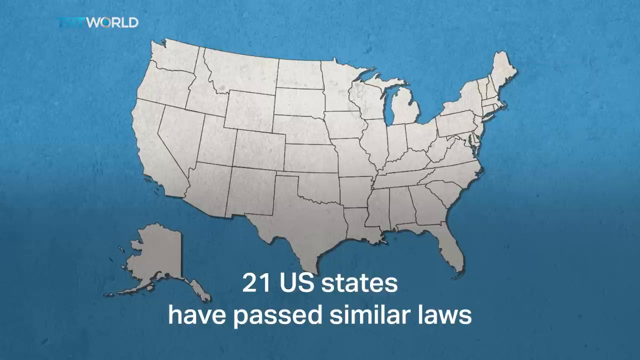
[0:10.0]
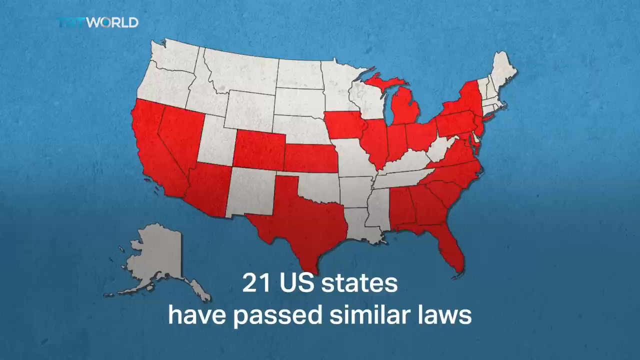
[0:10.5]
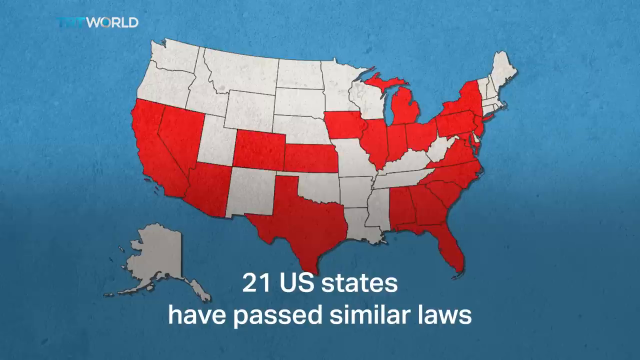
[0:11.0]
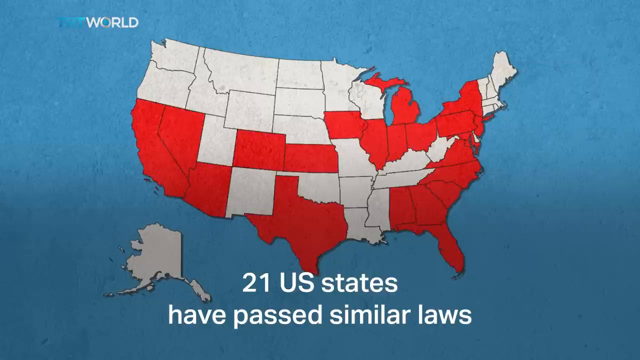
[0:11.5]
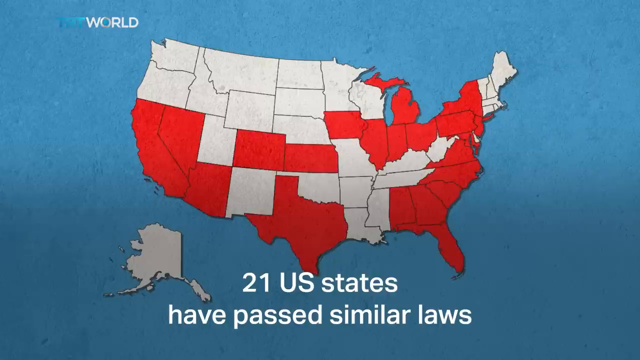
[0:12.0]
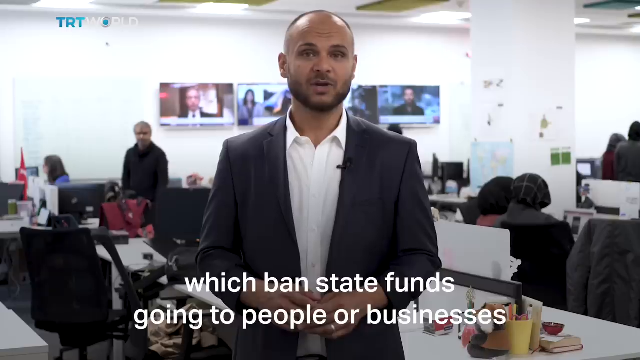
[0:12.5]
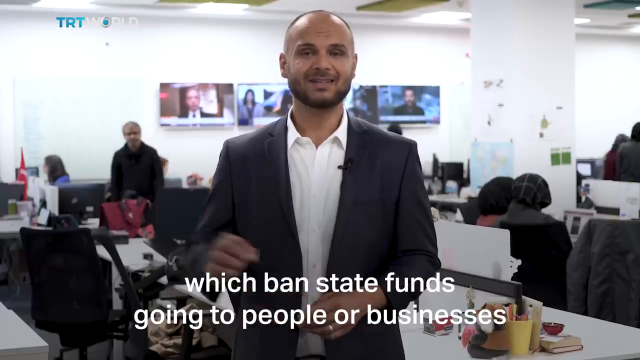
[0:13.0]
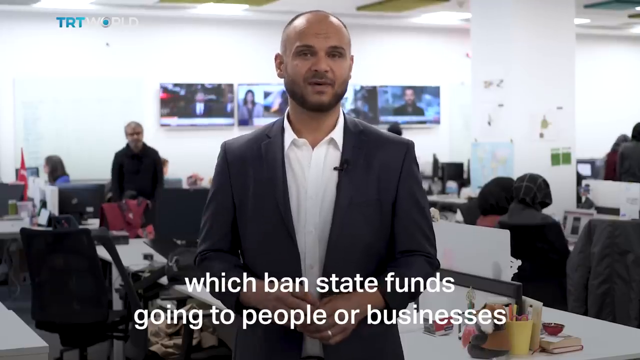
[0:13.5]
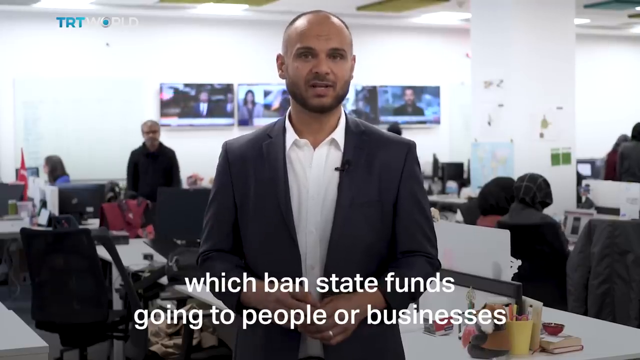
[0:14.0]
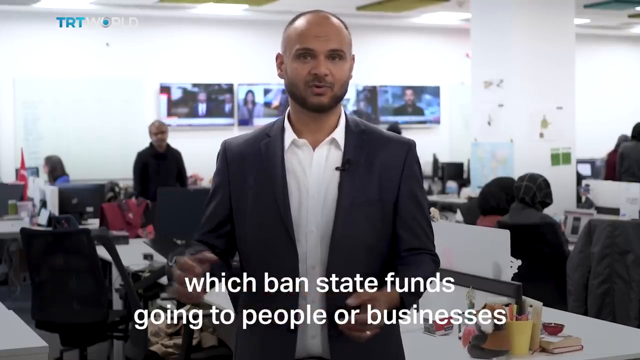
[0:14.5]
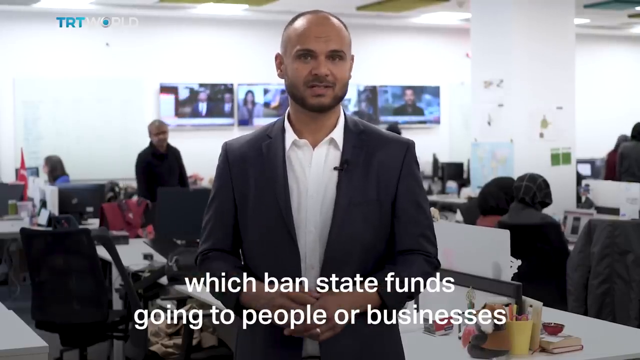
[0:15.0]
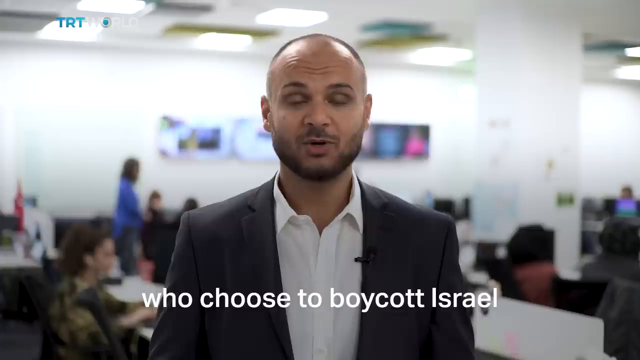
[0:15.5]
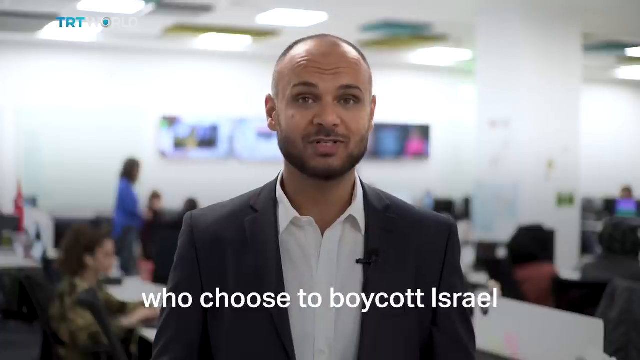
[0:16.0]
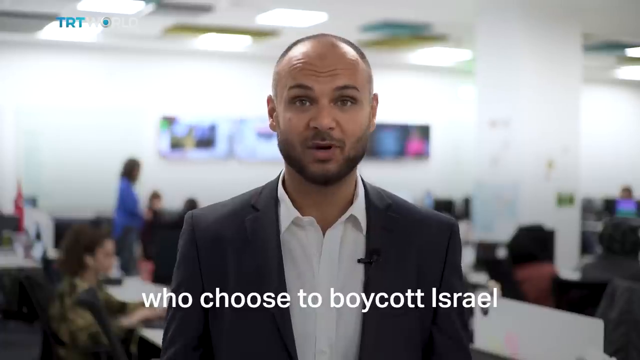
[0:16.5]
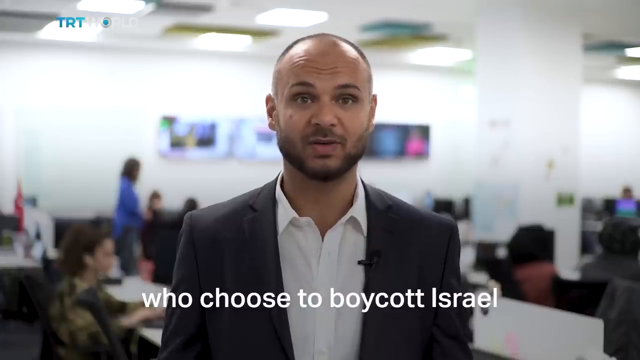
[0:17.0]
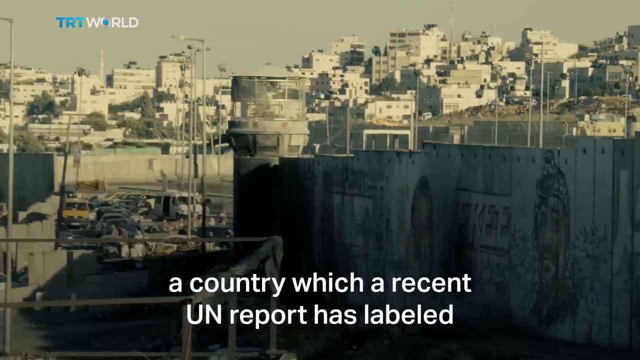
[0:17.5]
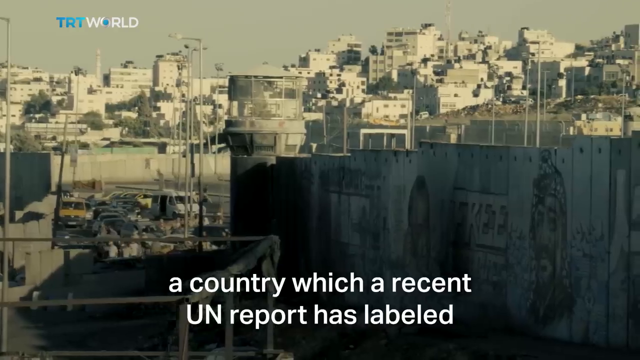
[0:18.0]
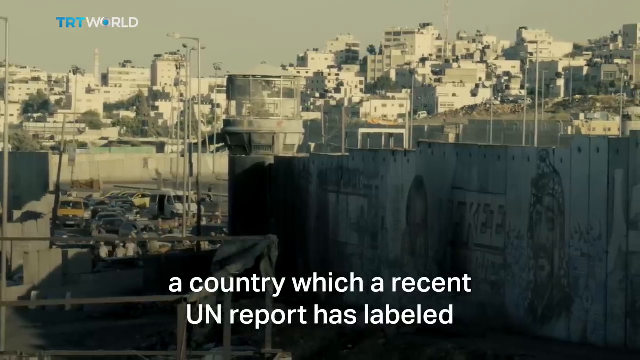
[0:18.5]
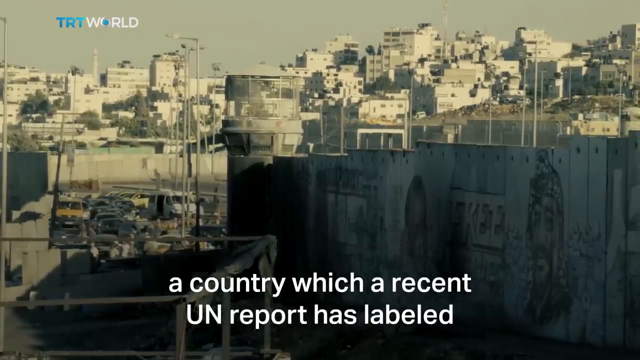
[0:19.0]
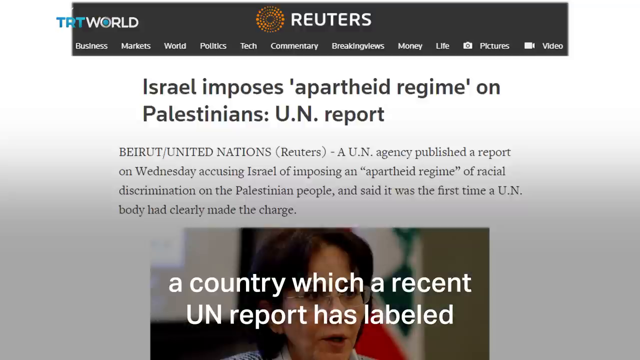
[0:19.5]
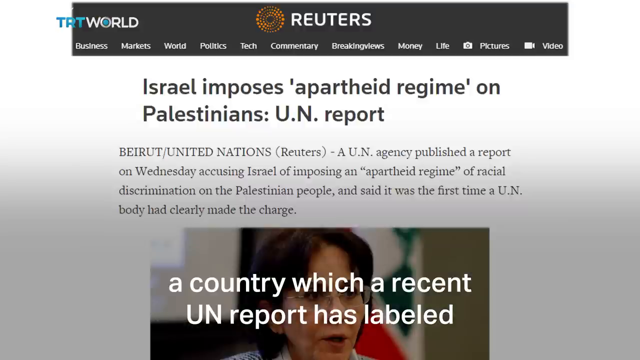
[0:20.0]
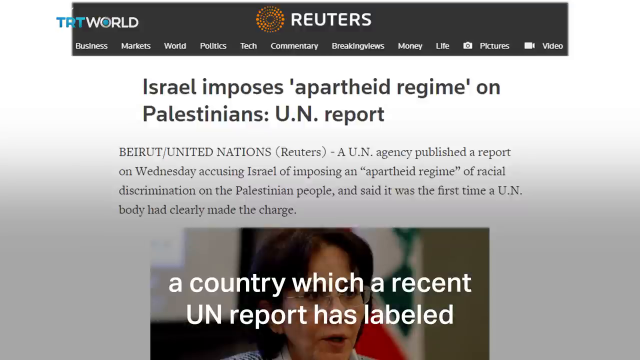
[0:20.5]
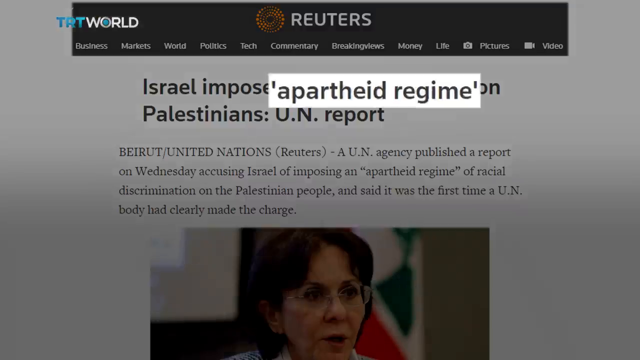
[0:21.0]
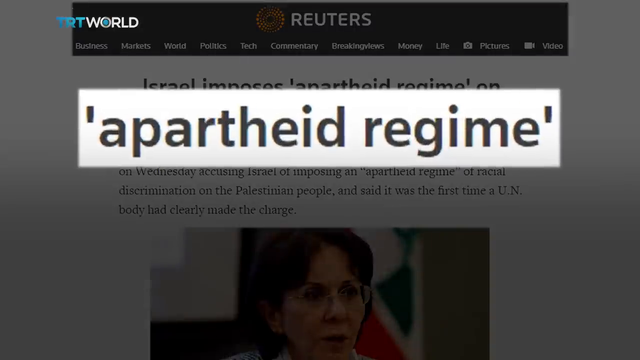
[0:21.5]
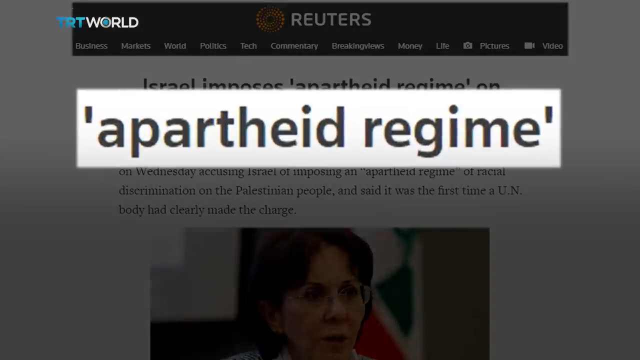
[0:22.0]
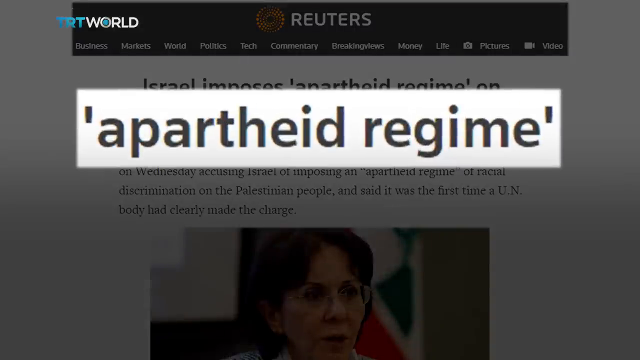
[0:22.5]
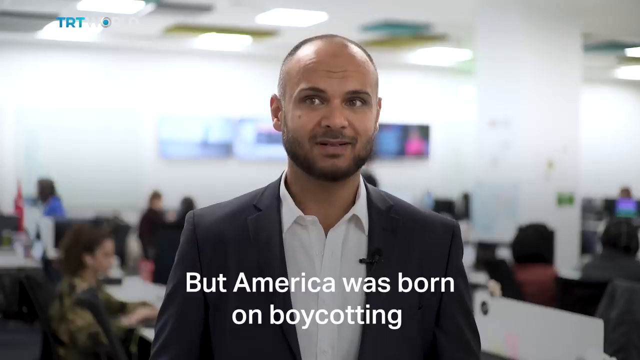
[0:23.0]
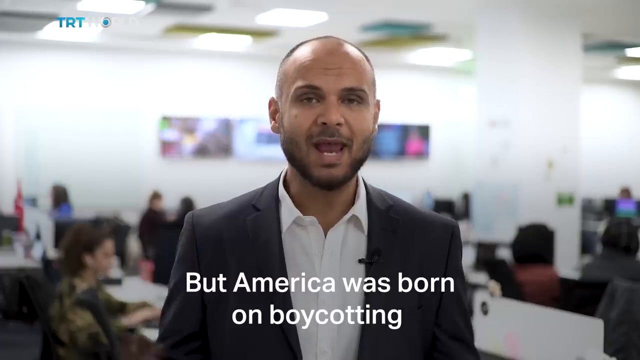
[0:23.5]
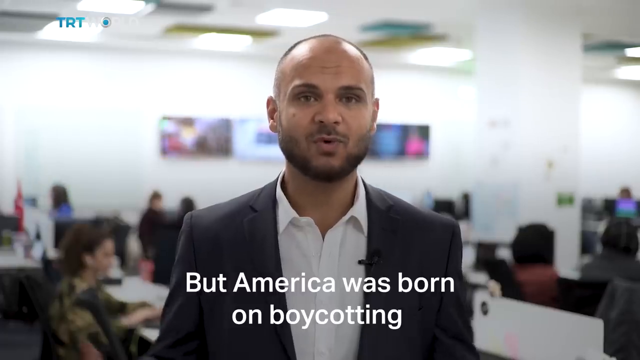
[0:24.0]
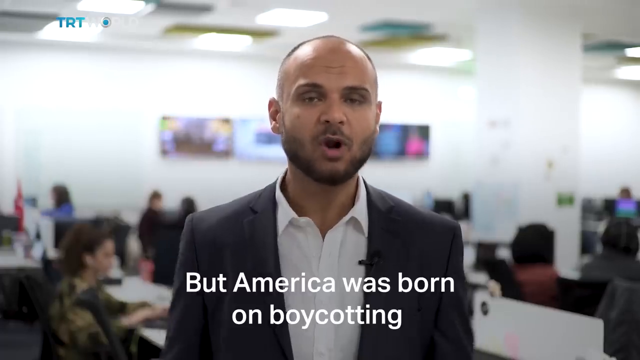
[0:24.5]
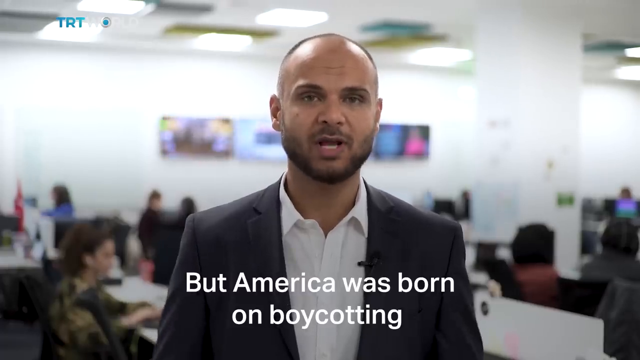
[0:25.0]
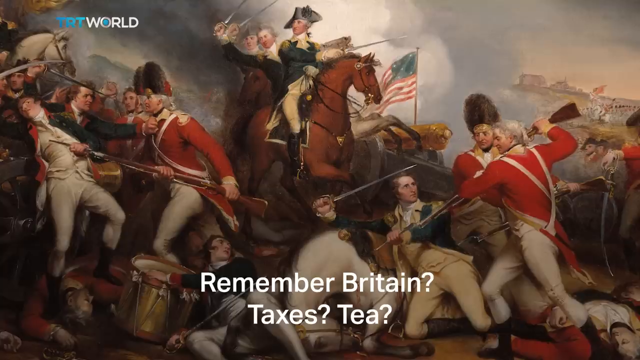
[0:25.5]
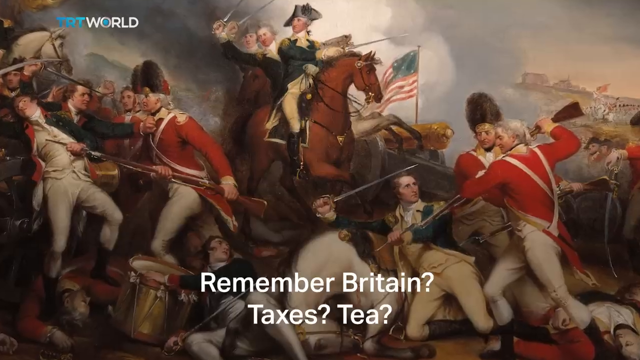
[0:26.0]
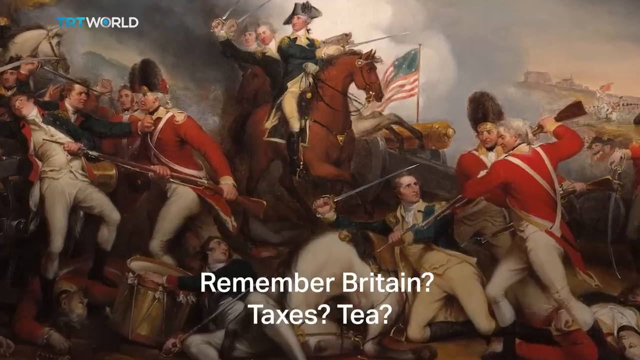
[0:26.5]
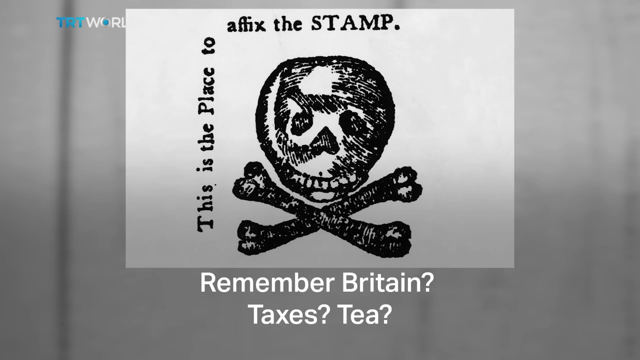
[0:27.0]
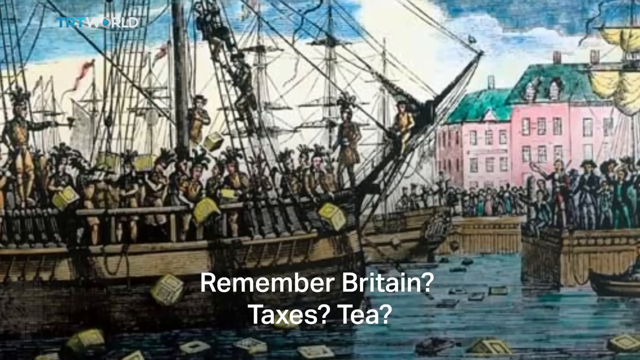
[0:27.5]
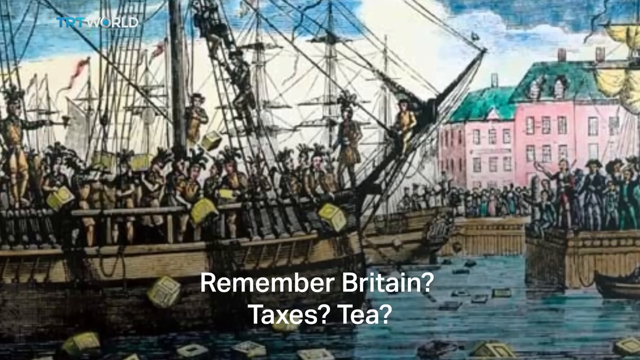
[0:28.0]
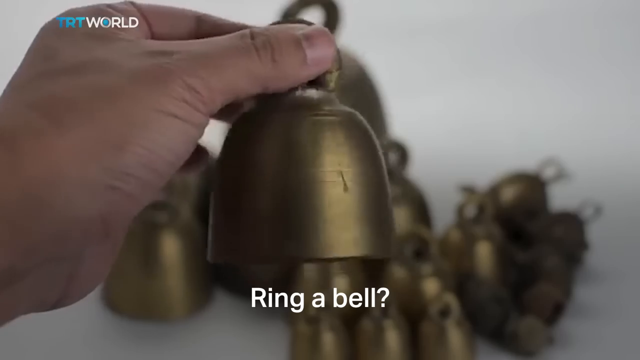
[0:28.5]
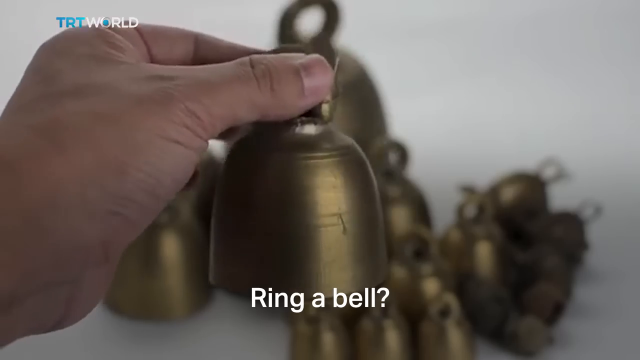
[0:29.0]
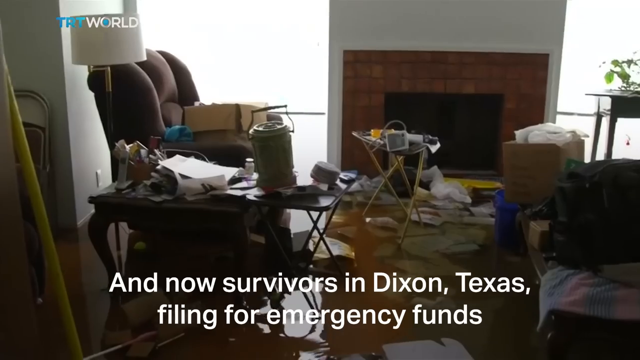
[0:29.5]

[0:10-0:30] A map of the United States appears with a caption below it that says, "21 US states have passed similar laws." Some states on the map are highlighted in red. The captions continue, "which ban state funds going to people or businesses?" while the news correspondent talks to the camera in the background. The captions go on: "Who chose to boycott Israel, a country which a recent UN report has labeled an apartheid regime?" A Reuters news article then appears on the screen with the title "Israel imposes 'apartheid regime' on Palestinians: UN report" and the text "Beirut/United Nations (Reuters) - A UN agency published a report on Wednesday accusing Israel of imposing an apartheid regime of racial discrimination on the Palestinian people." The reporter continues talking, with a caption underneath that says, "but America was born on boycotting. Remember Britain? Taxes? tea? ring a bell?" Another caption says, "and now survivors in Dixon, Texas filing for emergency funds."